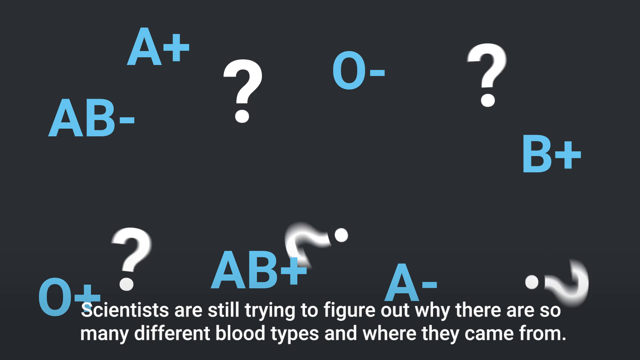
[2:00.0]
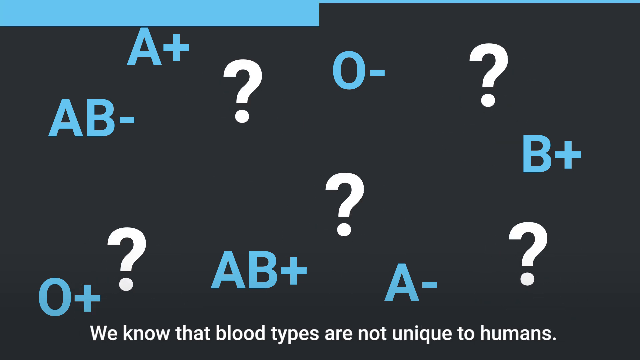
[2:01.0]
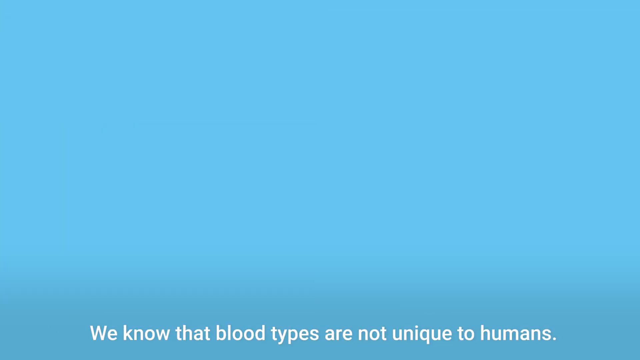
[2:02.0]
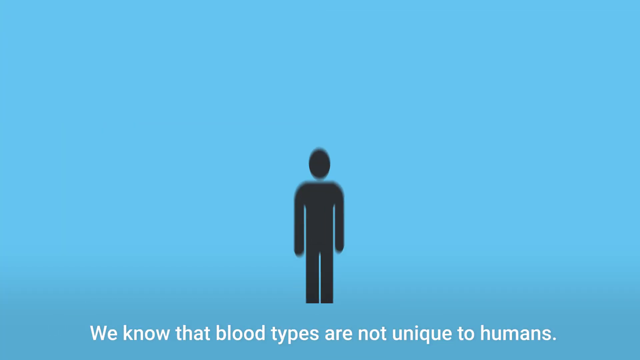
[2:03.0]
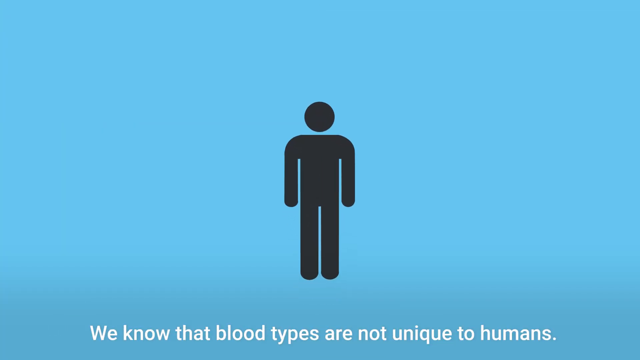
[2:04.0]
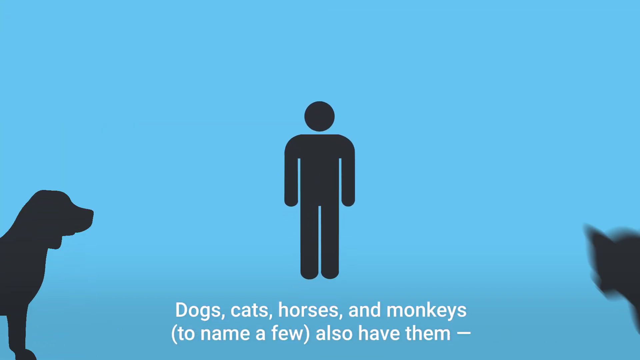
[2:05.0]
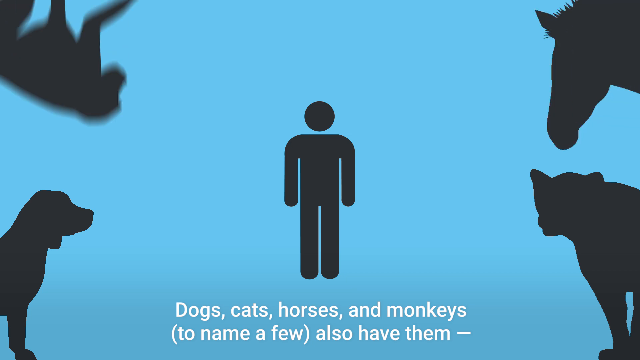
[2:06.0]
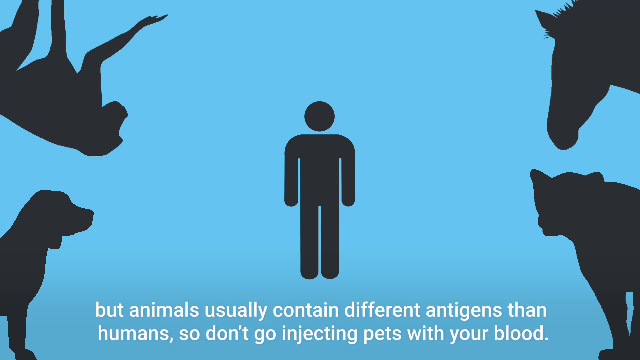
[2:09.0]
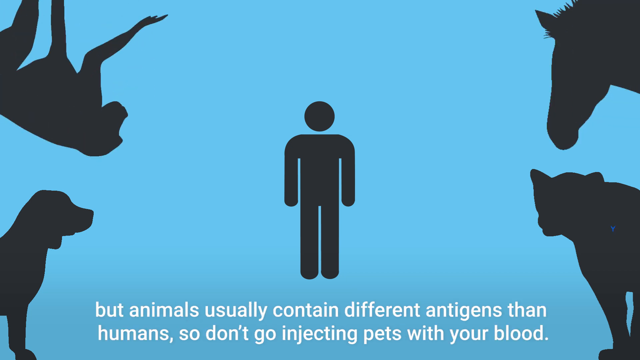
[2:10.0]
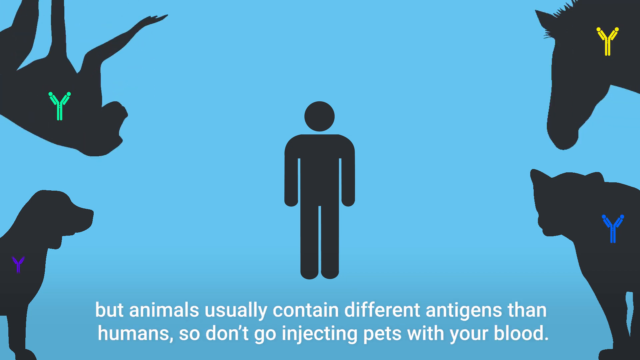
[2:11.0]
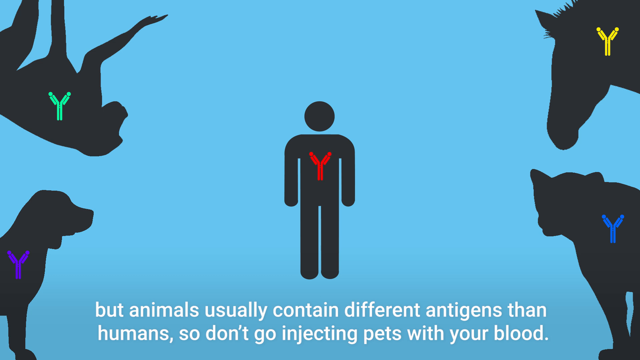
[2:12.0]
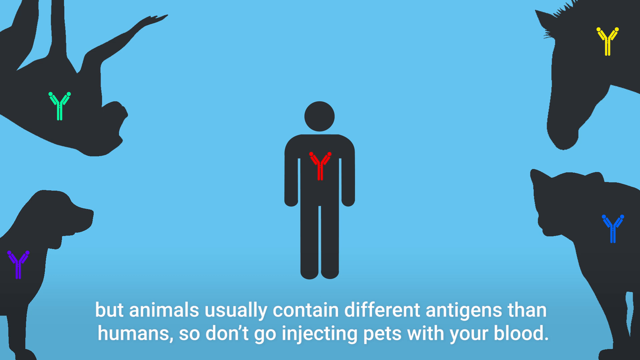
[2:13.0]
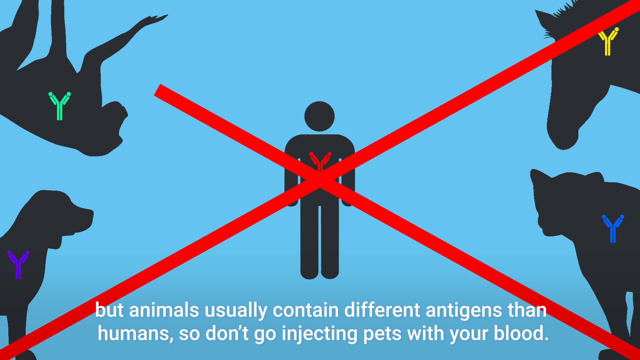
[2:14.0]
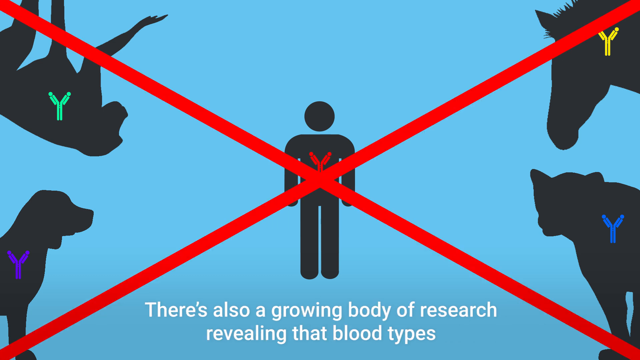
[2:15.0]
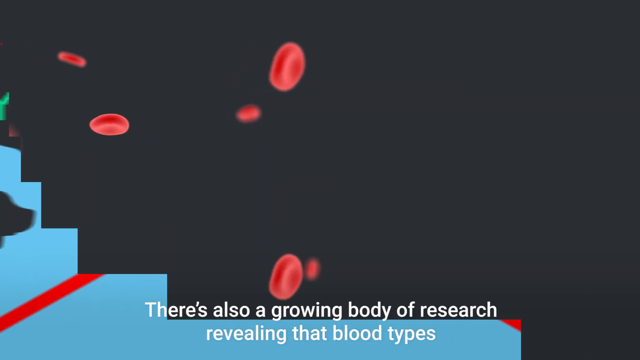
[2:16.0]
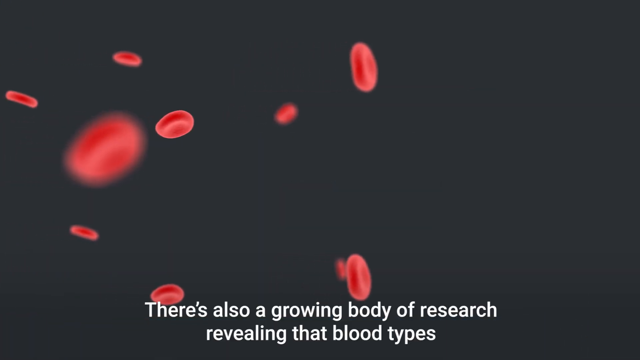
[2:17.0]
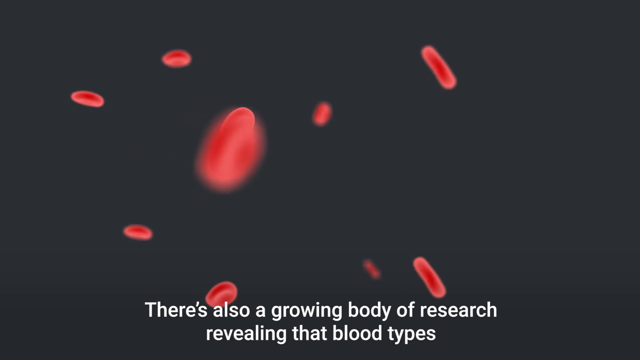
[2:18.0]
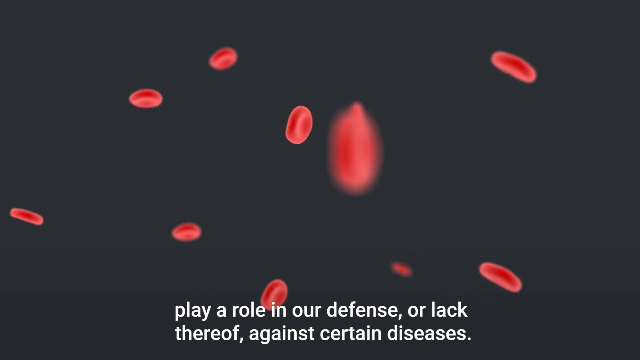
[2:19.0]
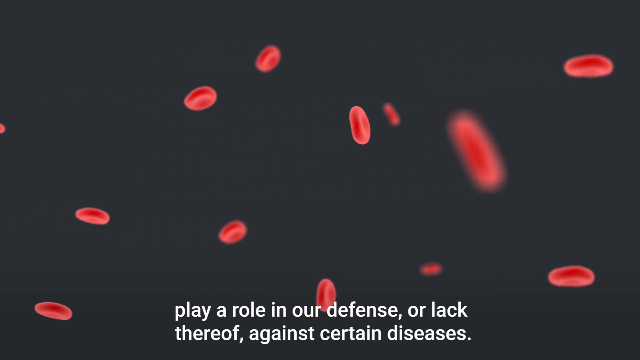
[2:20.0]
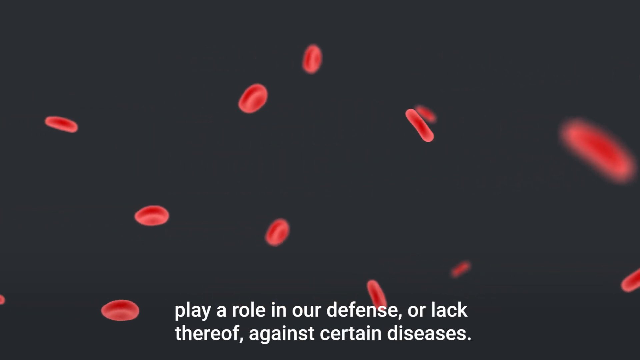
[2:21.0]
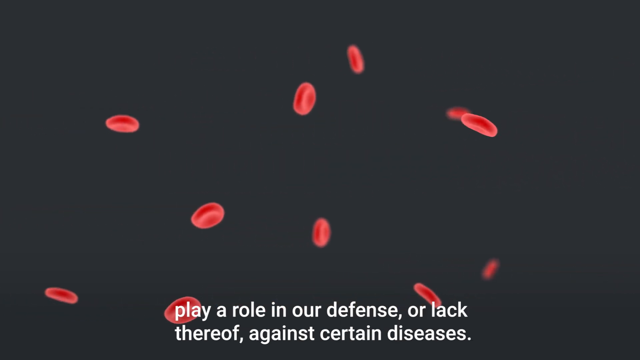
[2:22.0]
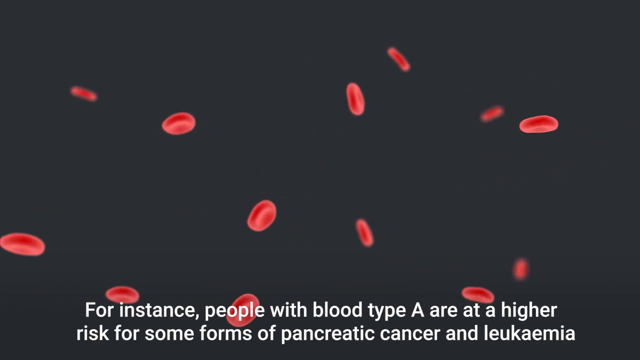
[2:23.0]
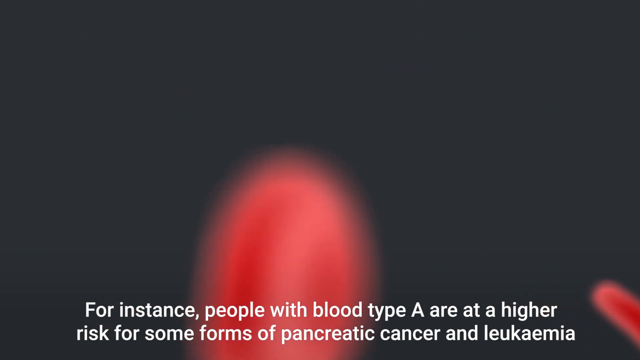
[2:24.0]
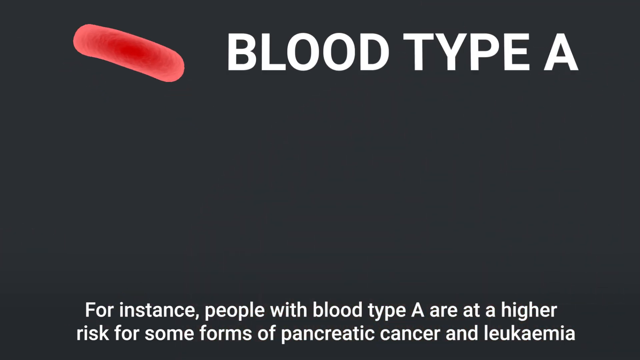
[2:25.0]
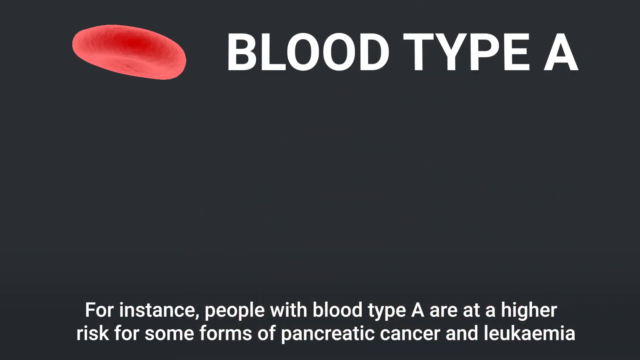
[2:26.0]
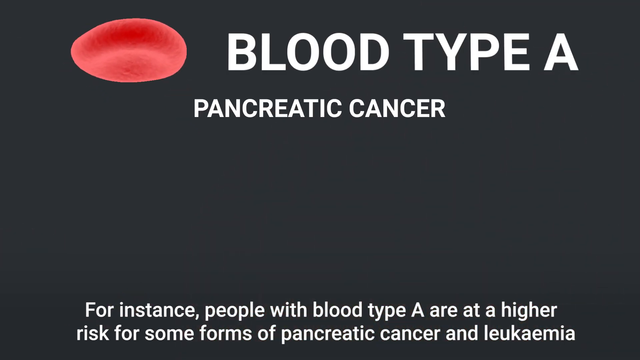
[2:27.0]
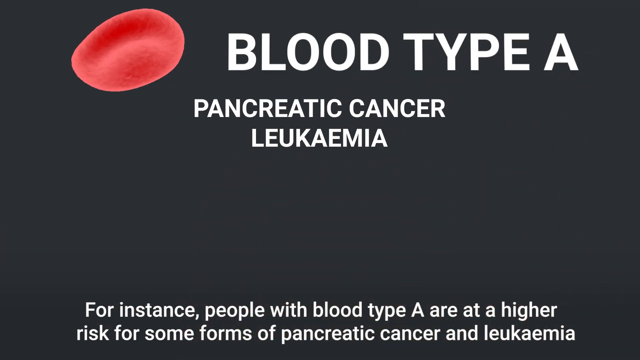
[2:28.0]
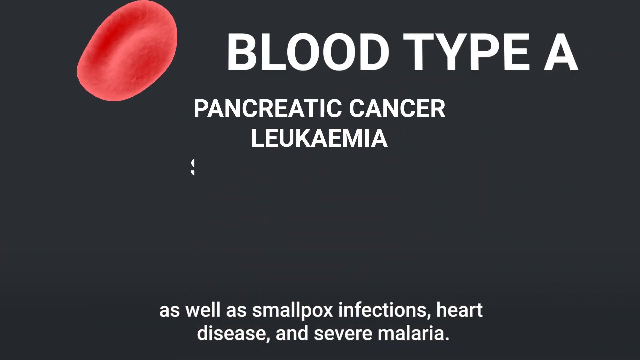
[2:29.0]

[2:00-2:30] A light blue screen comes up with a single silhouette of a person standing in the middle. Text says "we know that blood types are not unique to humans. Dogs, cats, horses, and monkeys." More silhouettes then appear: a monkey at the top left, a dog at the bottom left, a cat at the bottom right, and a horse at the top right. The text then says "but animals usually contain different antigens than humans. So don't go injecting pets with your blood," and the different types of antigens for each of the person and animals on screen are shown, all color coded differently. After that, more blood vessels appear, kind of floating off to the right, and the text says "there's also a growing body of research revealing that blood types play a role in our defense or lack thereof against certain diseases."